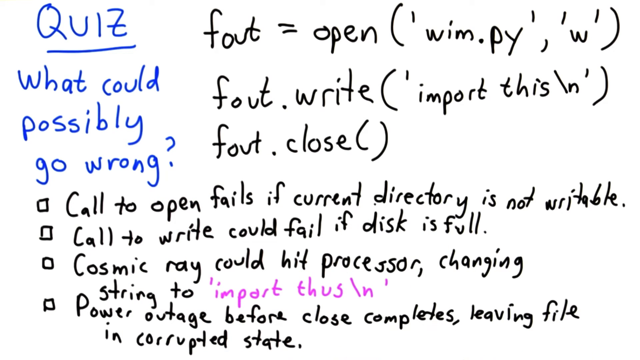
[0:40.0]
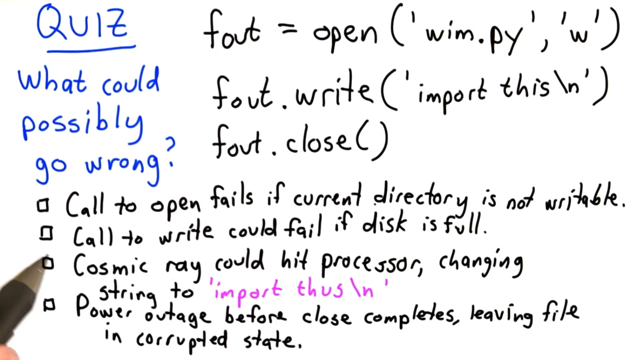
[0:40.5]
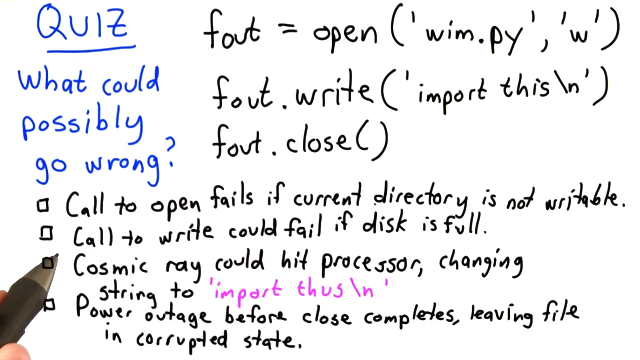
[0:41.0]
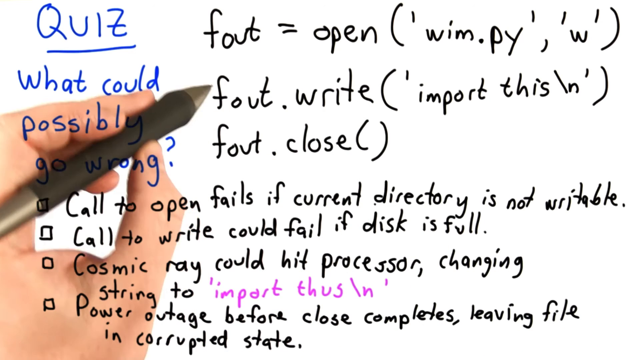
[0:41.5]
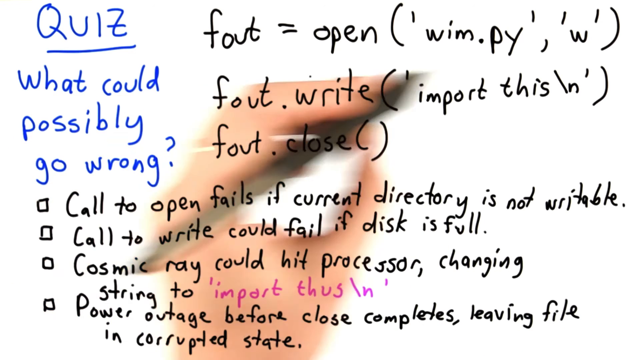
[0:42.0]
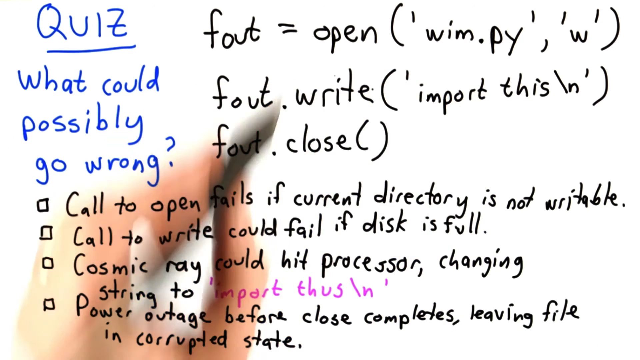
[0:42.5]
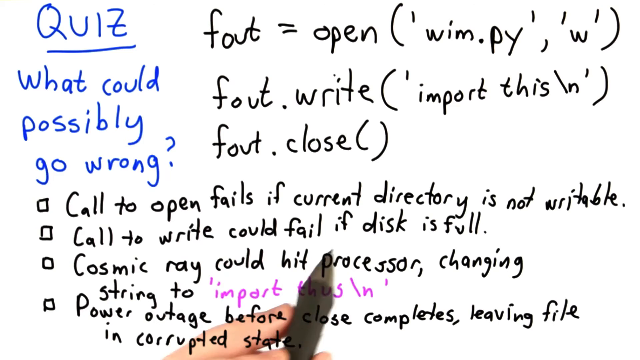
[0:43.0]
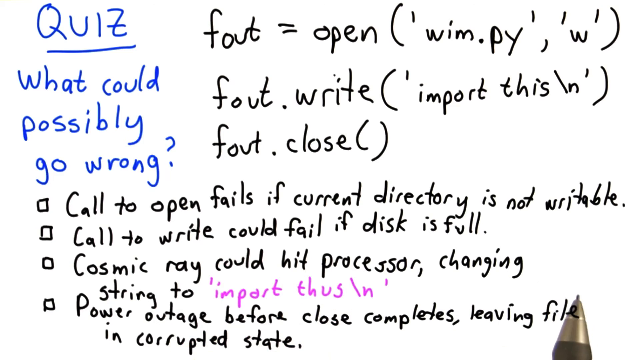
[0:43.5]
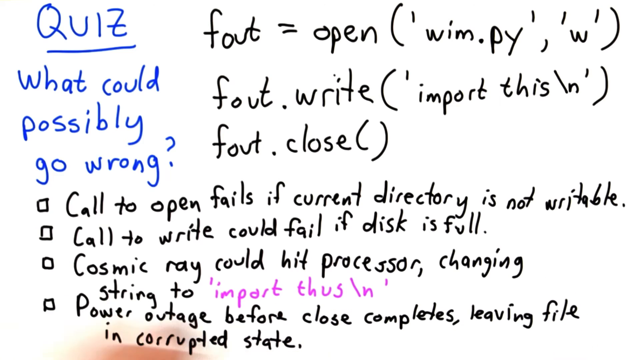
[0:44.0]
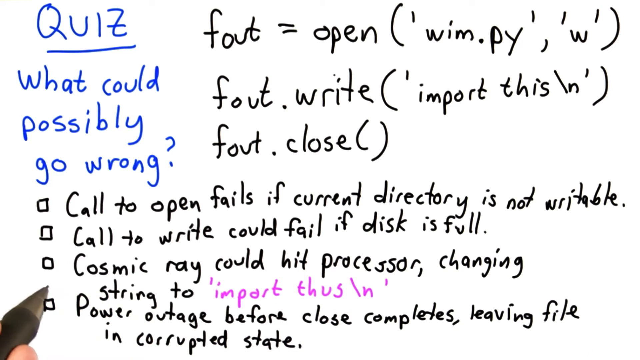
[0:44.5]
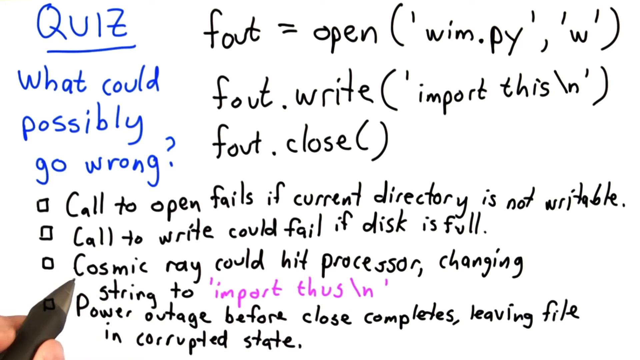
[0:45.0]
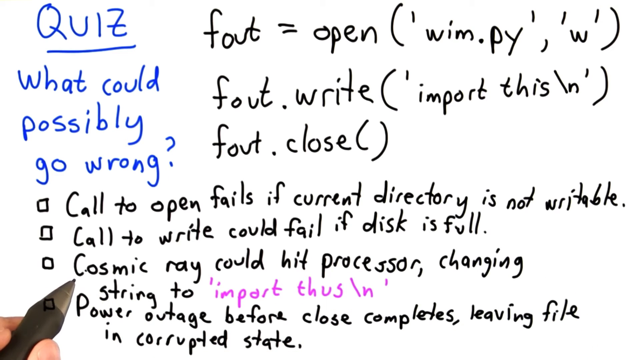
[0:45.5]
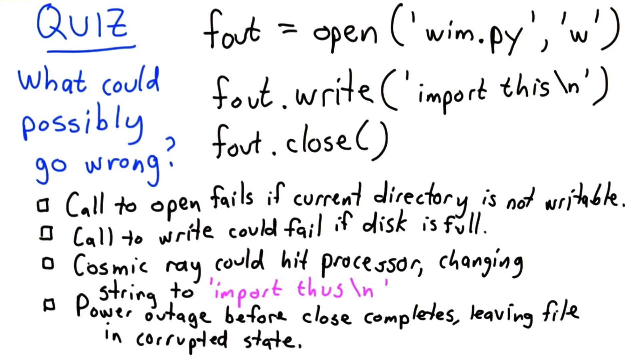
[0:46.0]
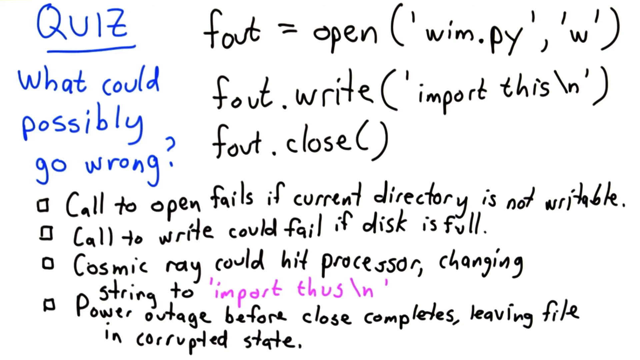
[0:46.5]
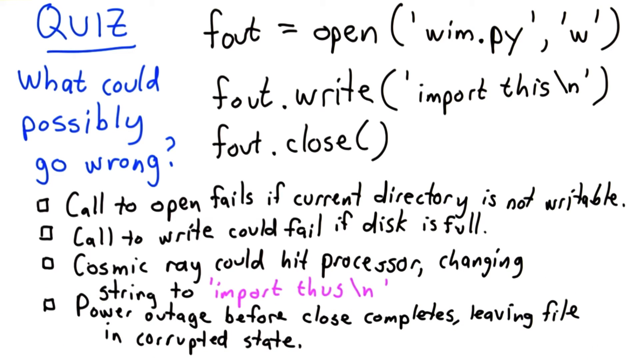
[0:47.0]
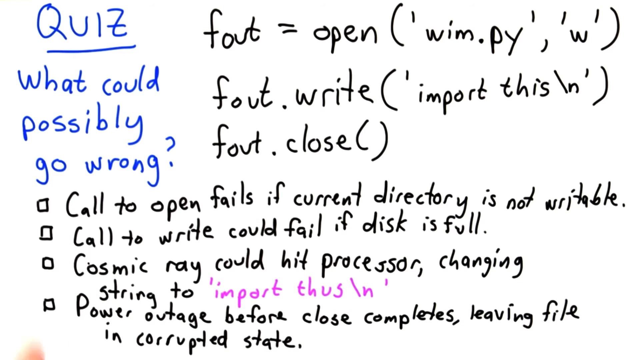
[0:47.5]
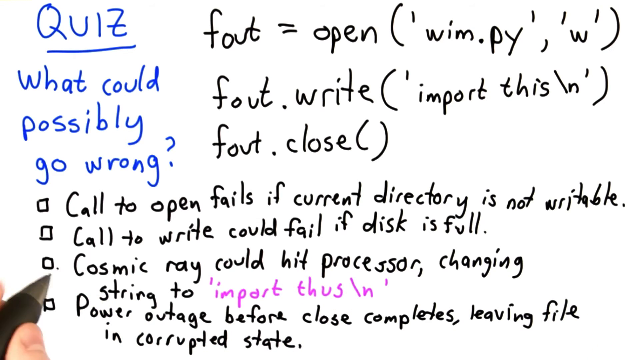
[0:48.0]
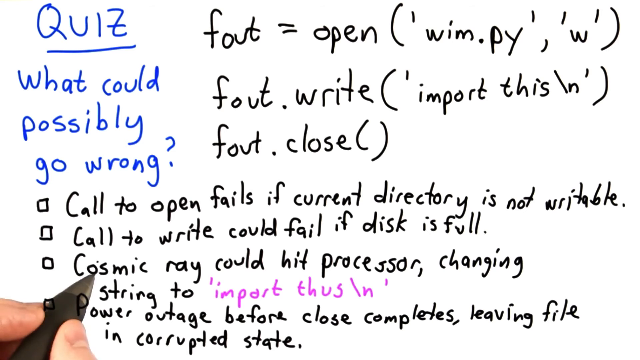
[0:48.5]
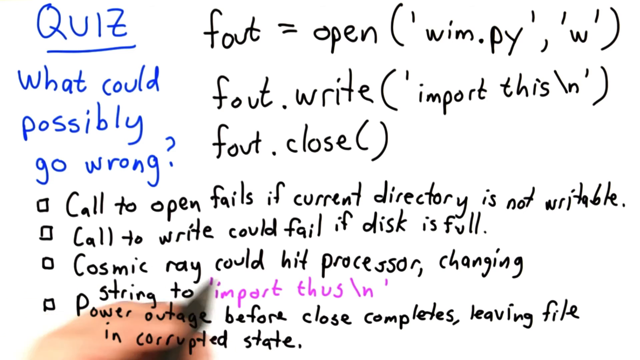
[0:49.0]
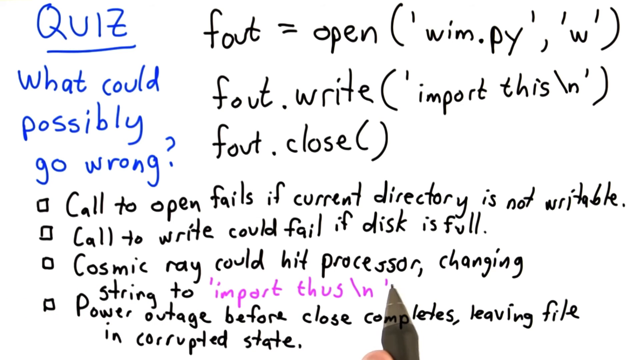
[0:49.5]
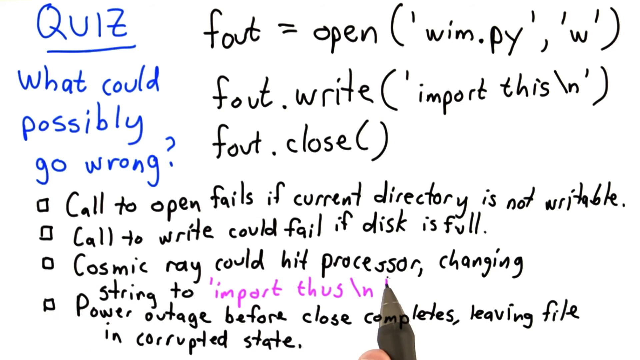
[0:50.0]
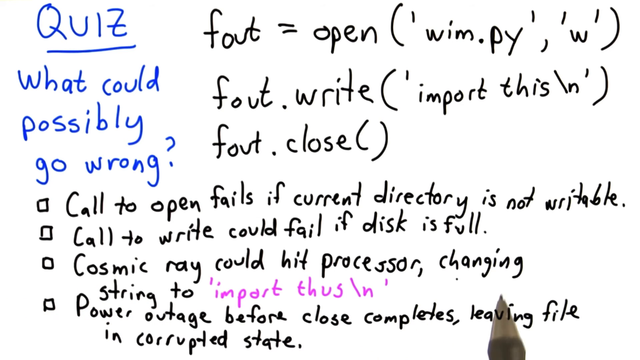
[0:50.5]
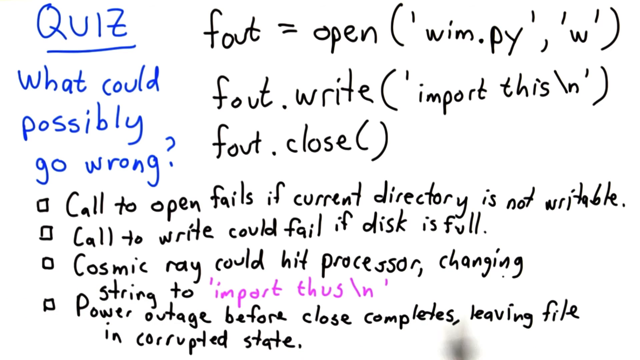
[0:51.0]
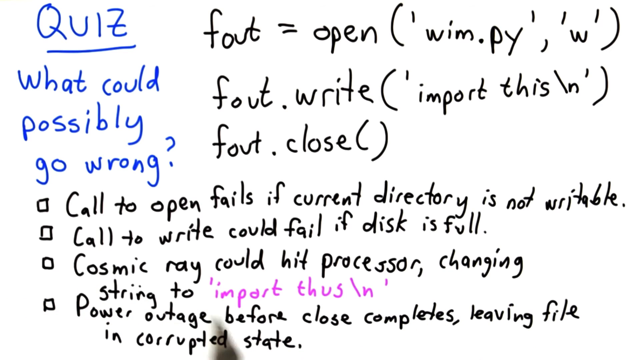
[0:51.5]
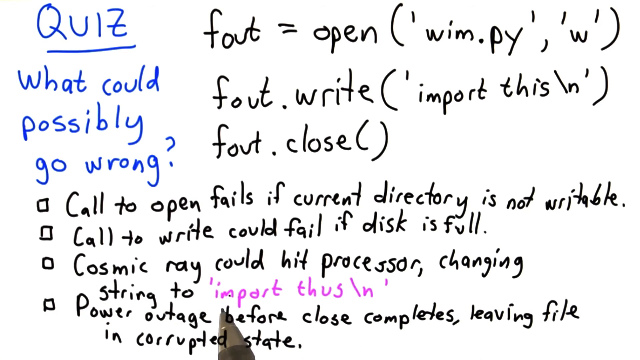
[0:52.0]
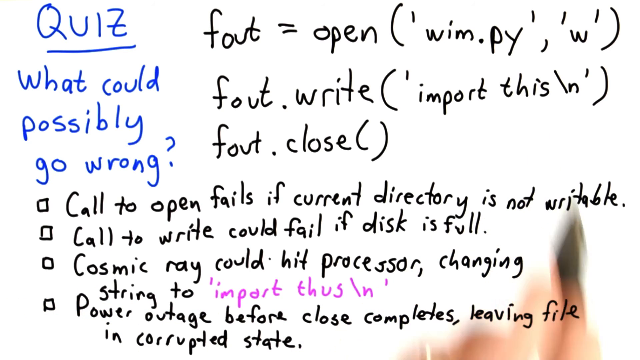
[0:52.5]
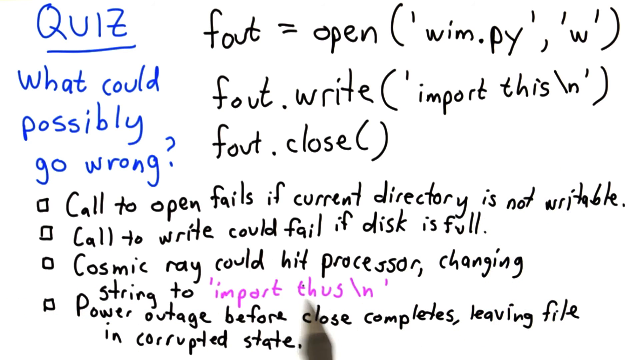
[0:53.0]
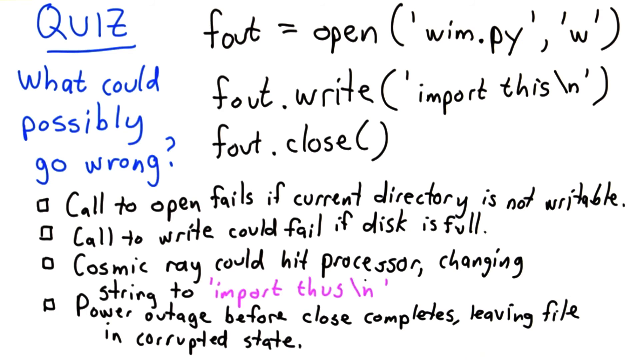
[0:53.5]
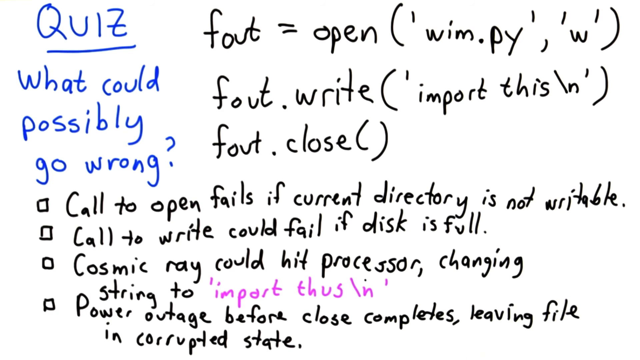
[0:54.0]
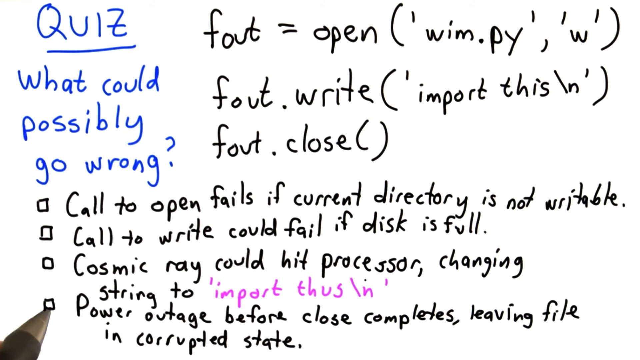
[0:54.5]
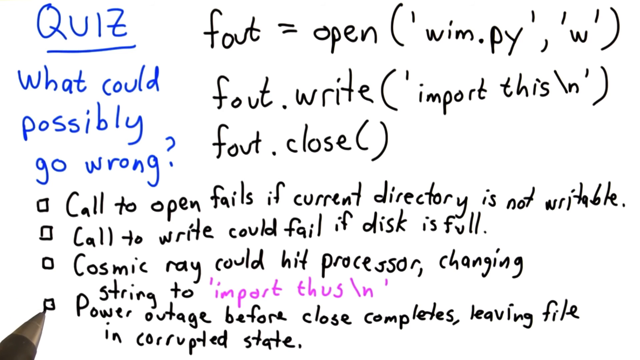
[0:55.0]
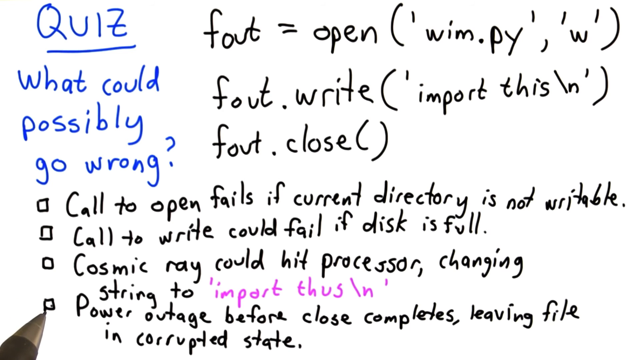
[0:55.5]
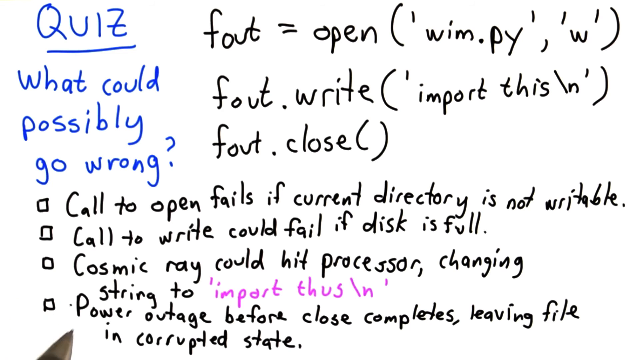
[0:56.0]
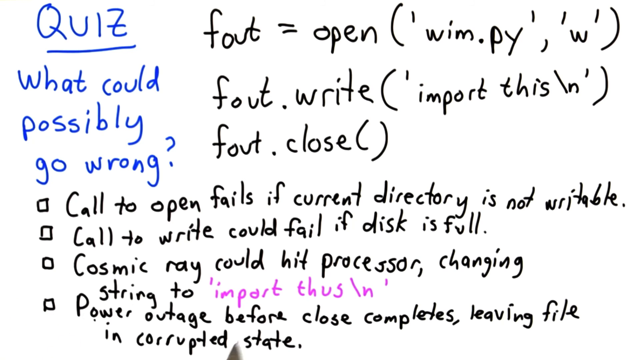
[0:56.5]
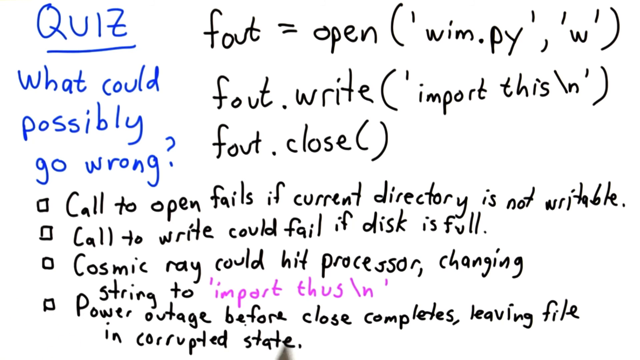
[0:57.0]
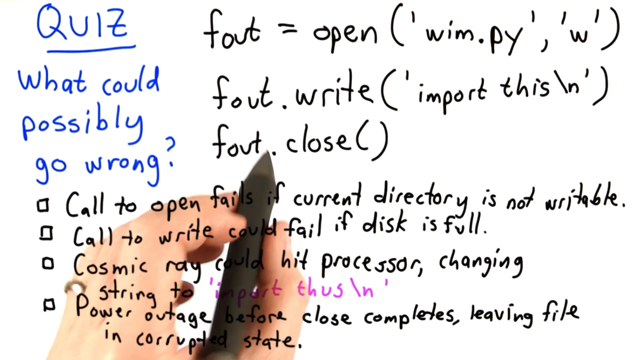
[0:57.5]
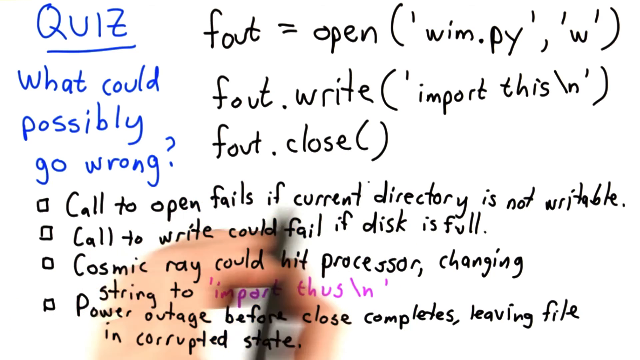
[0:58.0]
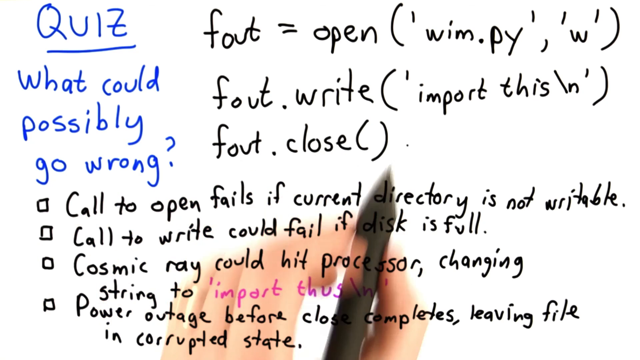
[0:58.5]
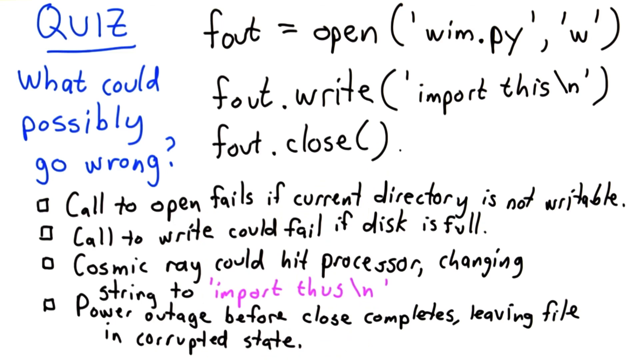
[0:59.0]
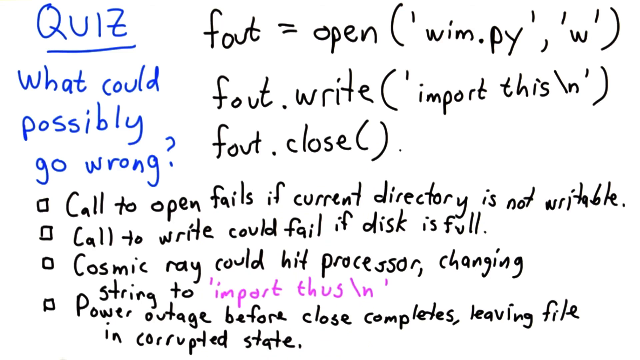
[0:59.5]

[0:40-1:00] The writer circles or underlines different options. "import this" with a slash n is highlighted in purple, and the writer goes through the option beginning "Cosmic Ray could hit processor changing string". They move between that option and the power outage option, without focusing much on the first two, and never check anything off.